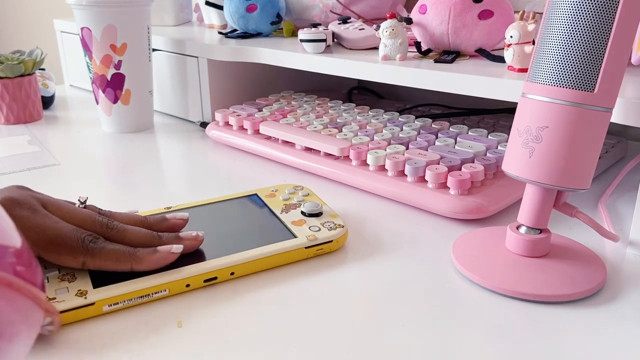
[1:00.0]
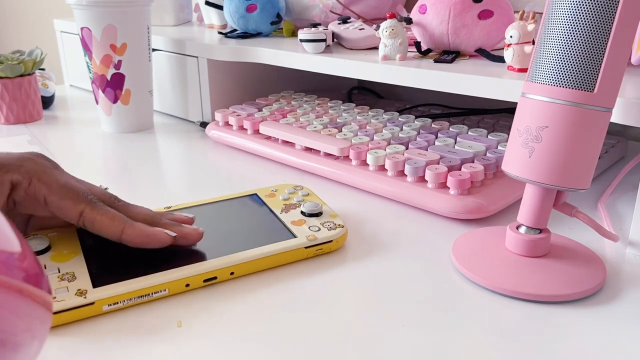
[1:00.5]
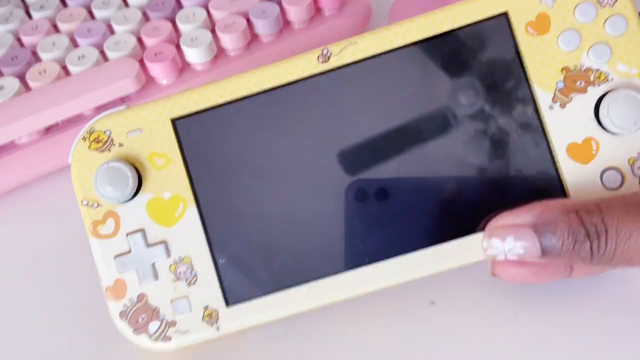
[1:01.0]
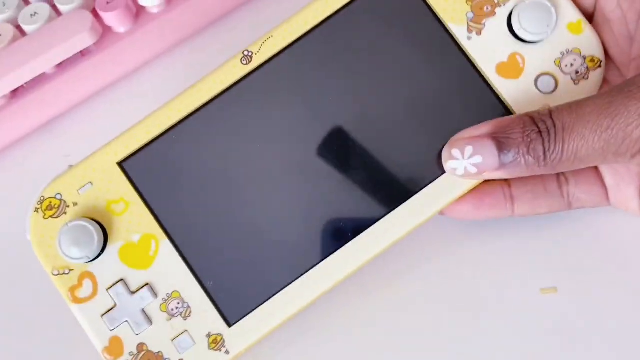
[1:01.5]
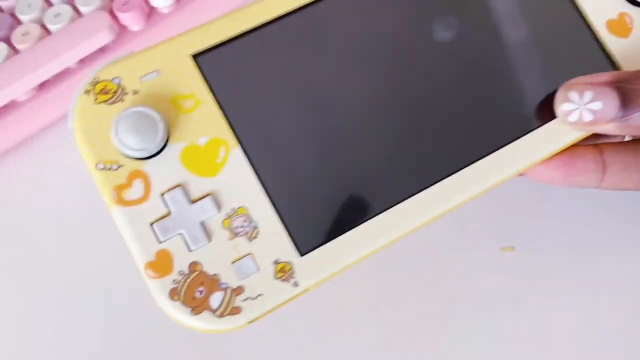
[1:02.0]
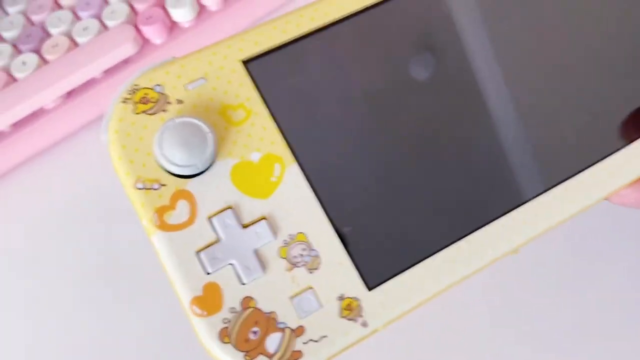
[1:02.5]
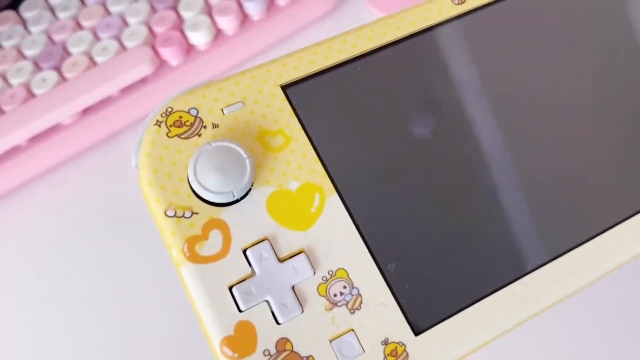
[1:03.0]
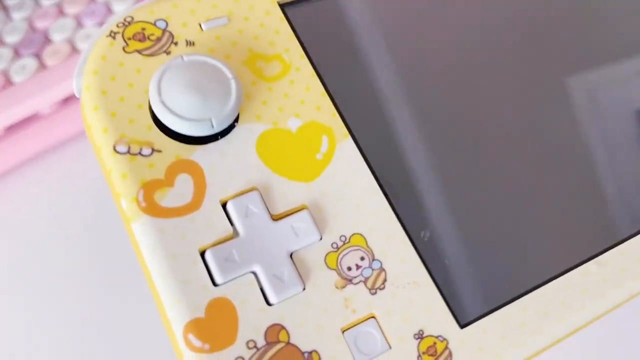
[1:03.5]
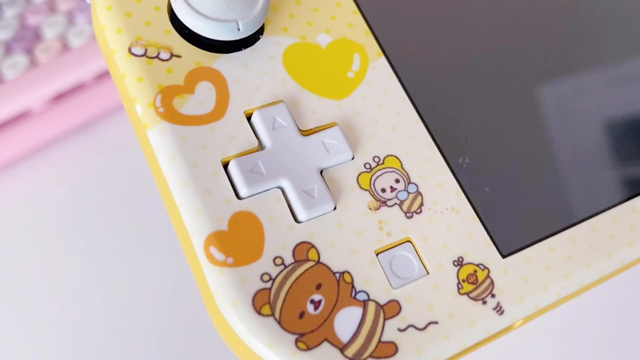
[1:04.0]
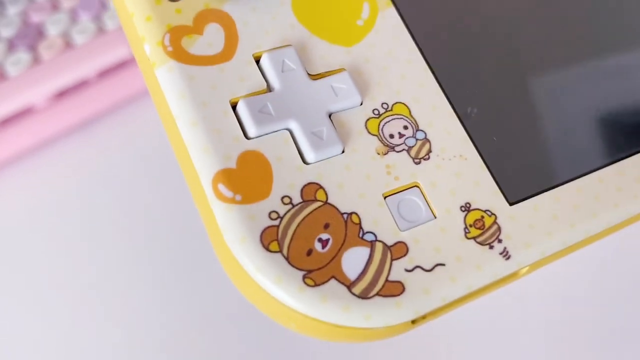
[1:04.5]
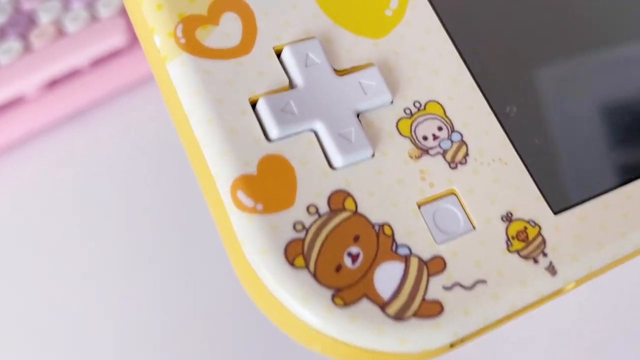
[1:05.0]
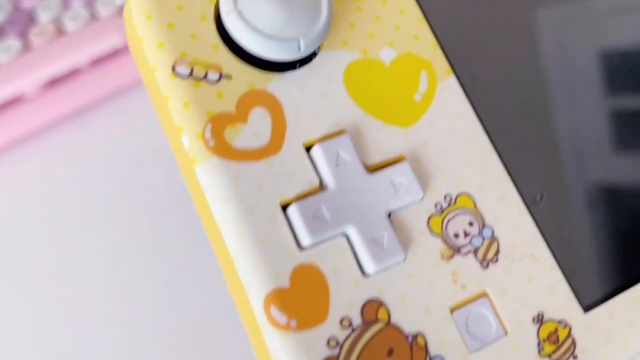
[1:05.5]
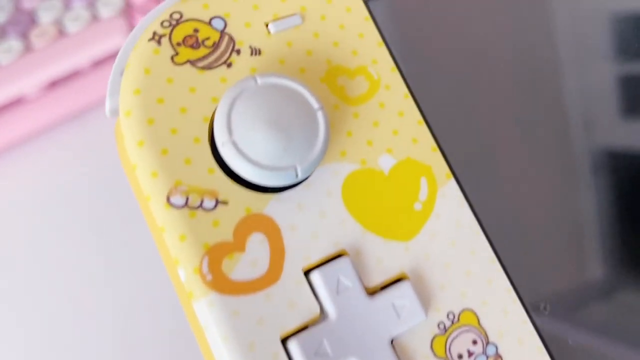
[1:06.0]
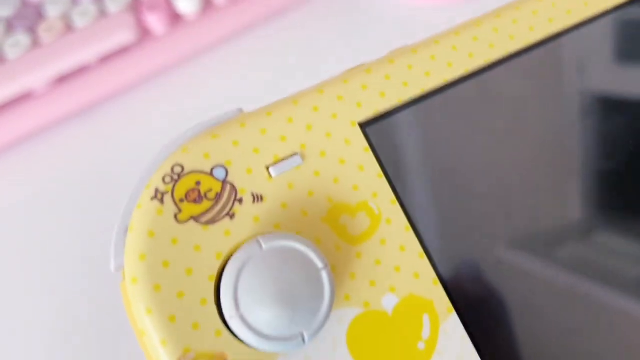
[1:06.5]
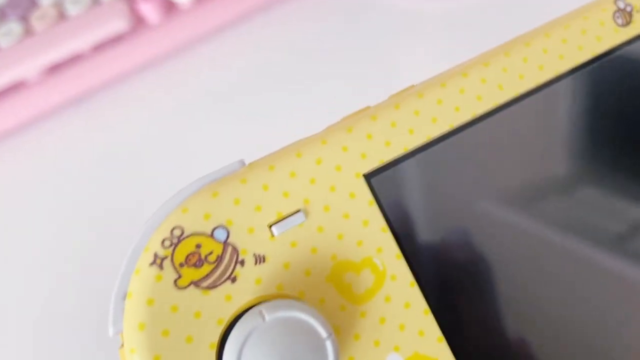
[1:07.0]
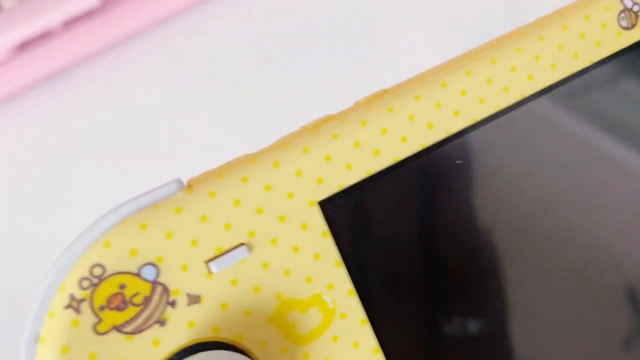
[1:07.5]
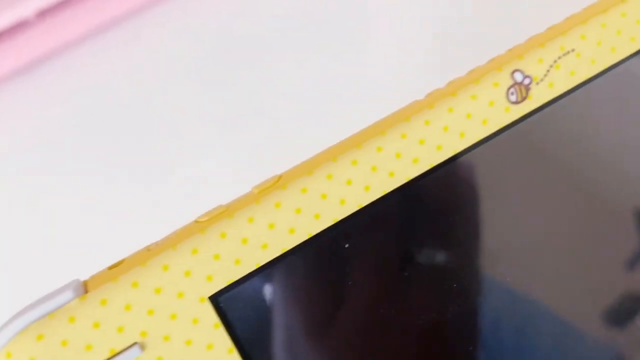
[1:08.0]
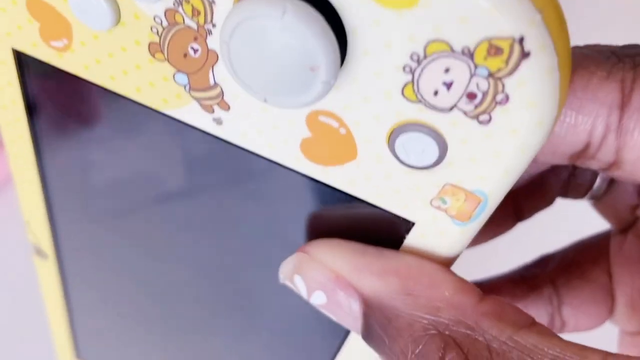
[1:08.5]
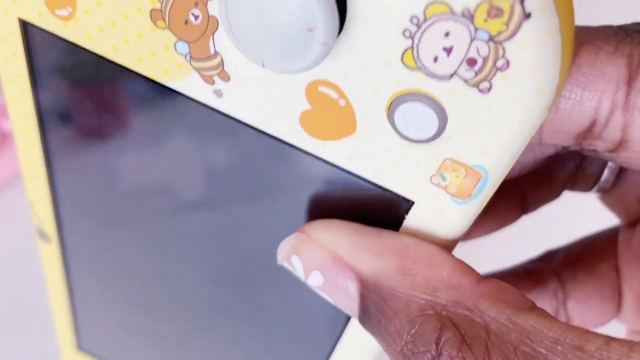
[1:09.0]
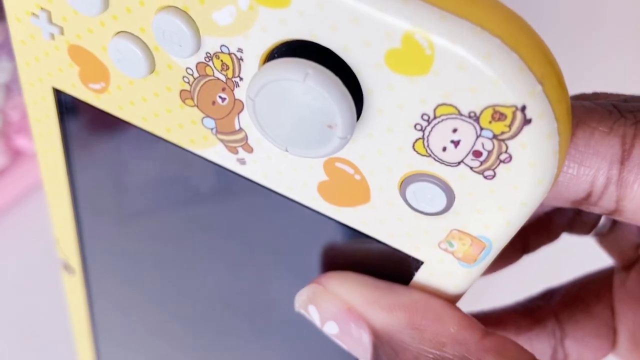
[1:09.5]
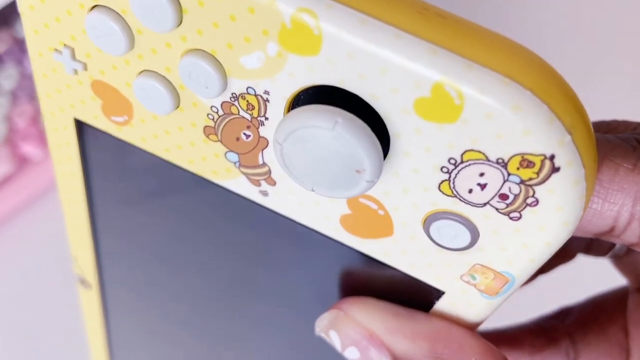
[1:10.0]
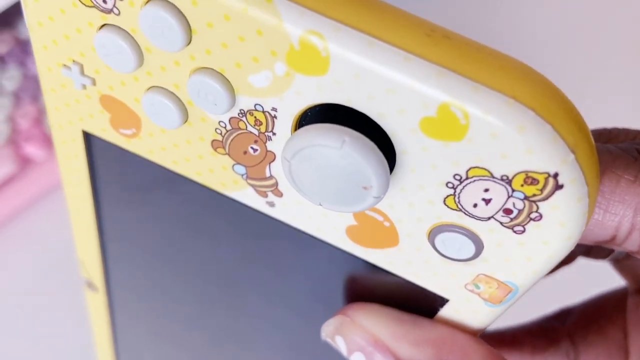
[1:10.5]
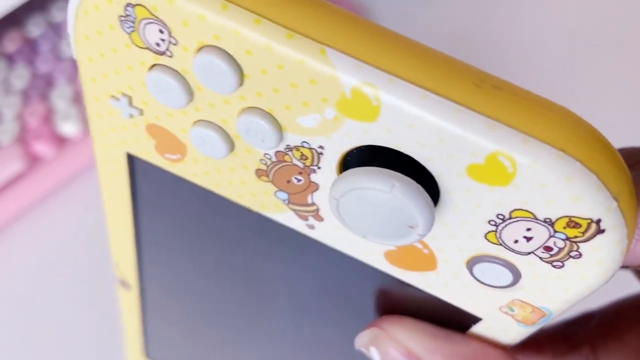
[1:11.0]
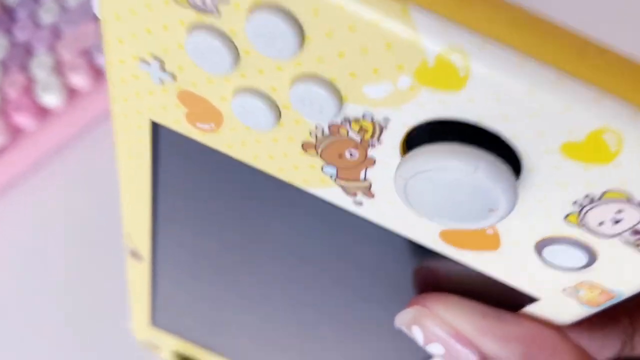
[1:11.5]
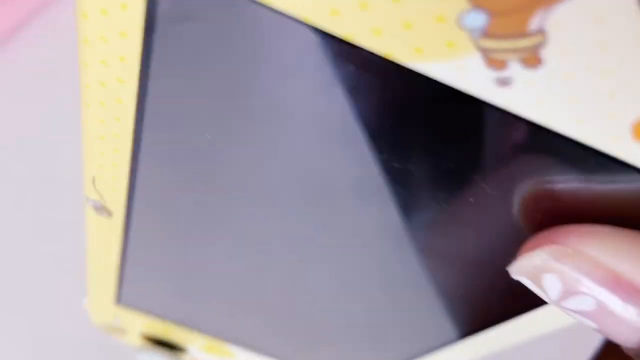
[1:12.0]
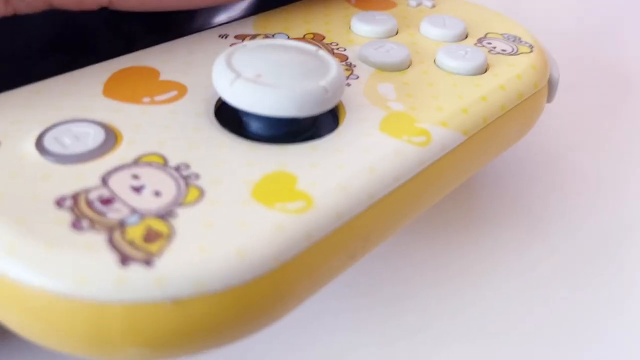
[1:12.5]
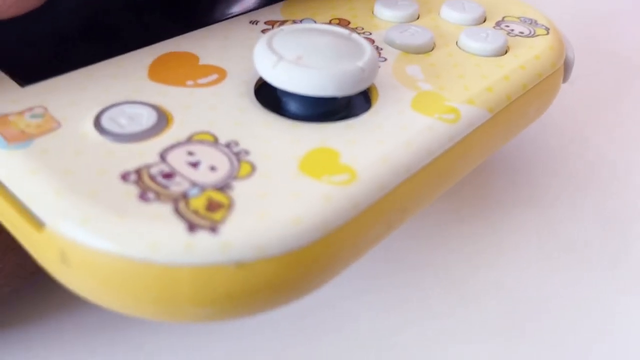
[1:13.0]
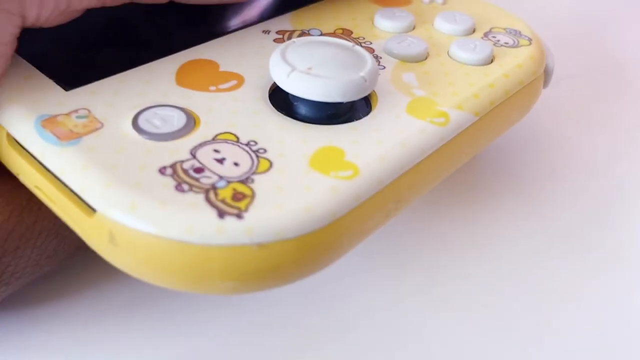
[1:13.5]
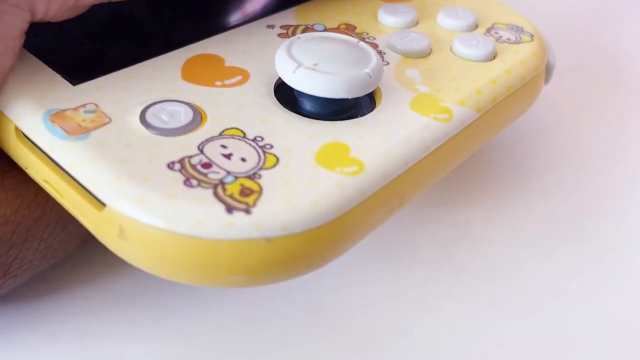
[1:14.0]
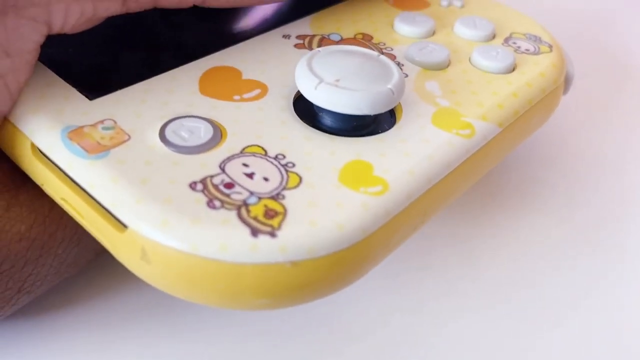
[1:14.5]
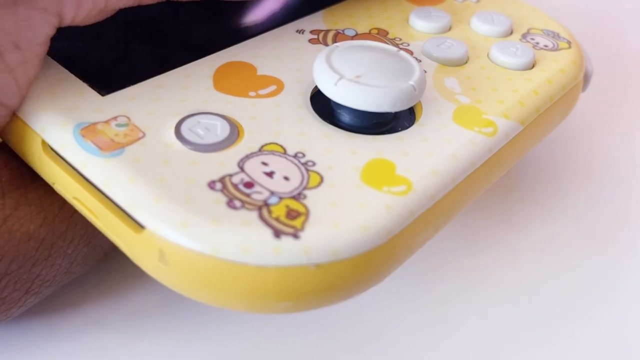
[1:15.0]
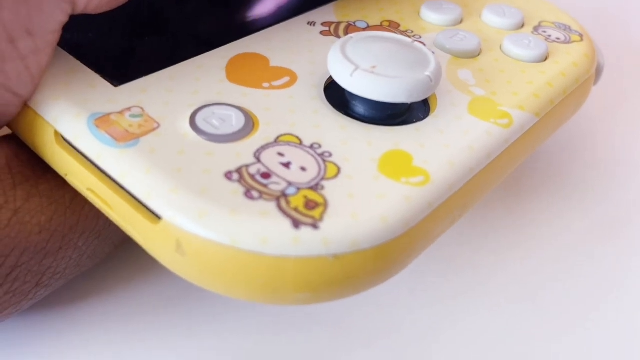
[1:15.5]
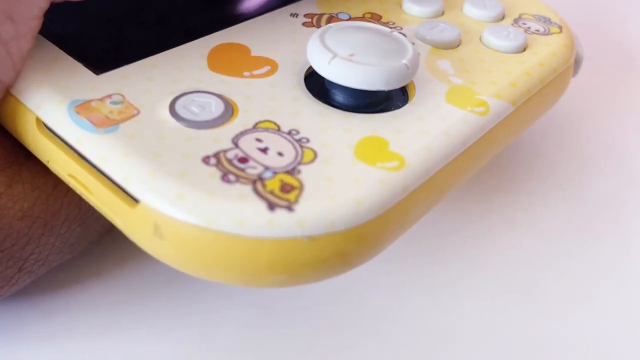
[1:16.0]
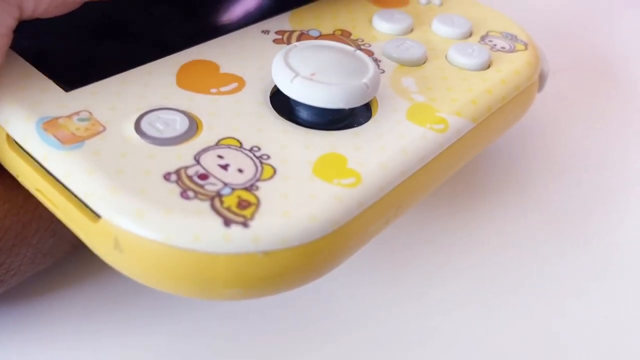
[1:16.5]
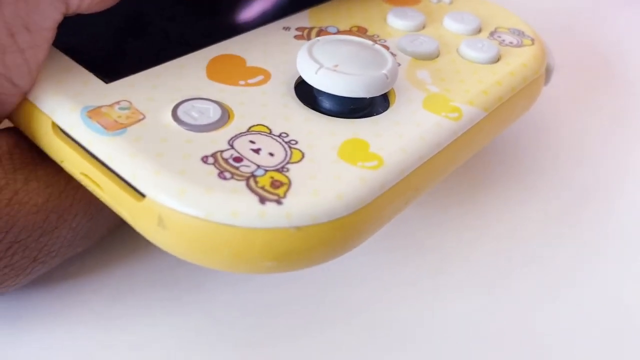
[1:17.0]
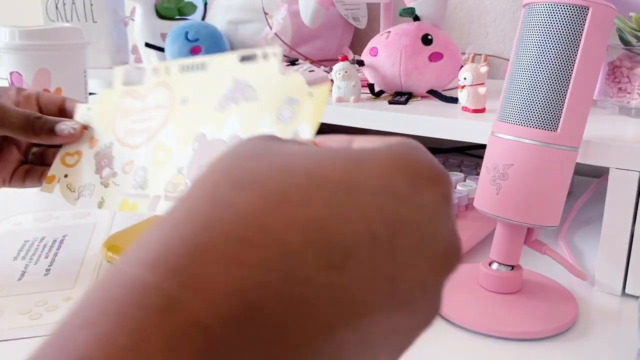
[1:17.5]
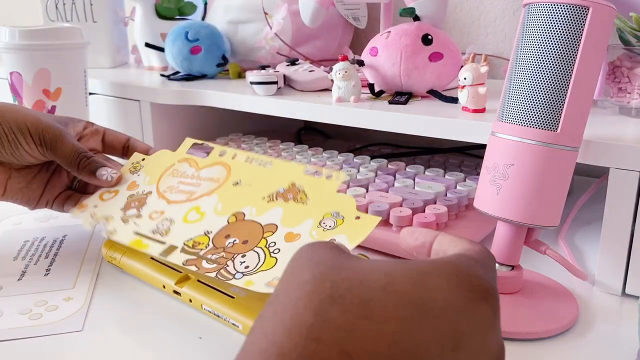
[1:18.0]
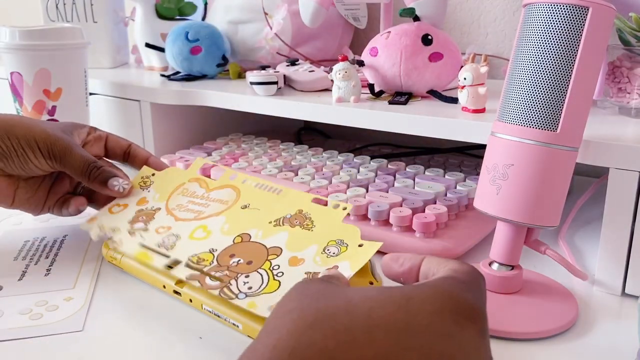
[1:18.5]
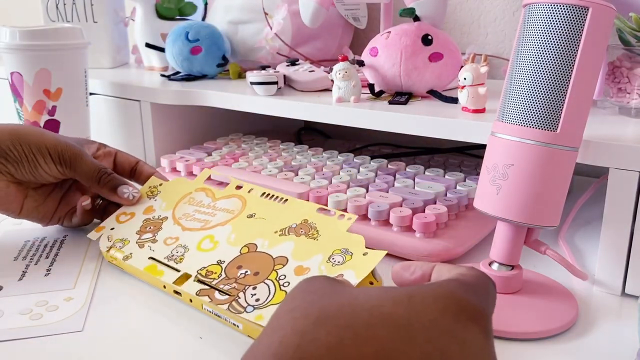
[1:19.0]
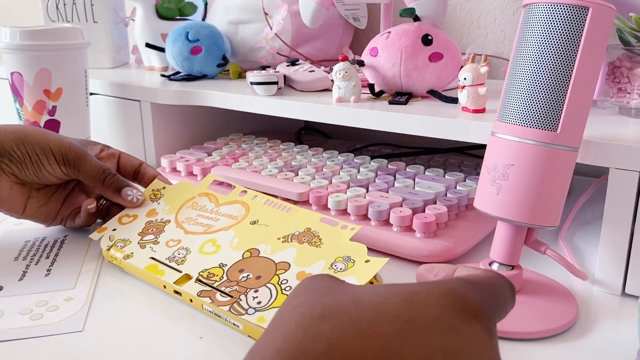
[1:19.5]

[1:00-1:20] A close-up shows a gaming console with a screen, a rather large dark monitor, and white buttons on the sides. The shot moves to focus on the left portion of the console, where particular colors appear on the upper surface: hearts in different colors, some orange and others yellow, are clearly visible, along with very small yellow dots or balls. The shot changes to the right portion of the same console, which also bears illustrations, some representing orange and yellow hearts. Finally, two hands place a colored sheet of paper on the back of a yellow gaming console. In the background there are many objects on white surfaces, with colors on this desk tending toward very light pink and purple.